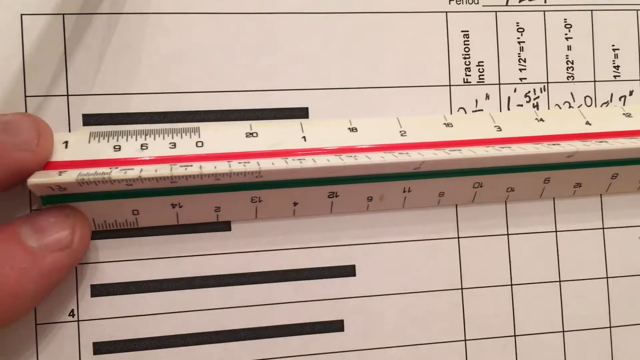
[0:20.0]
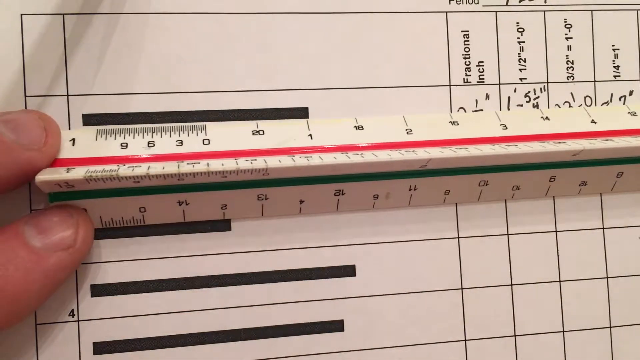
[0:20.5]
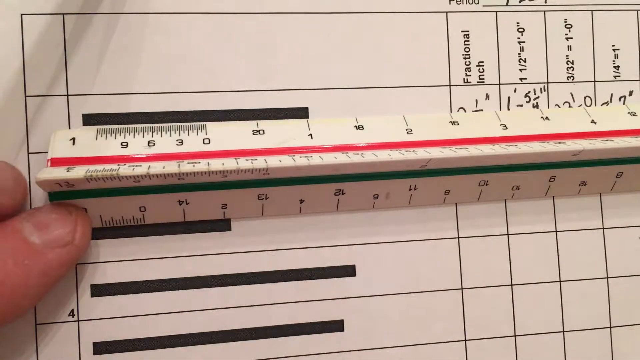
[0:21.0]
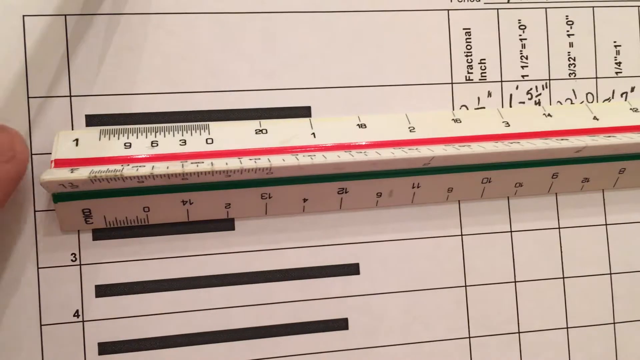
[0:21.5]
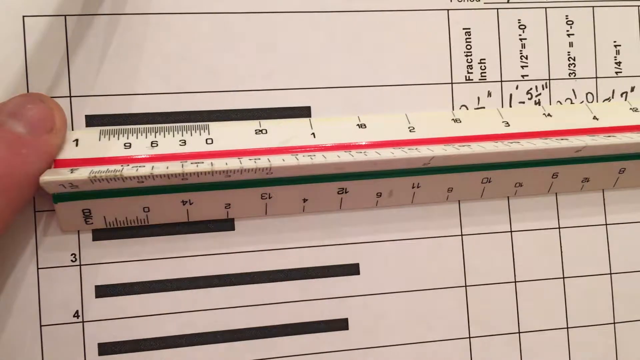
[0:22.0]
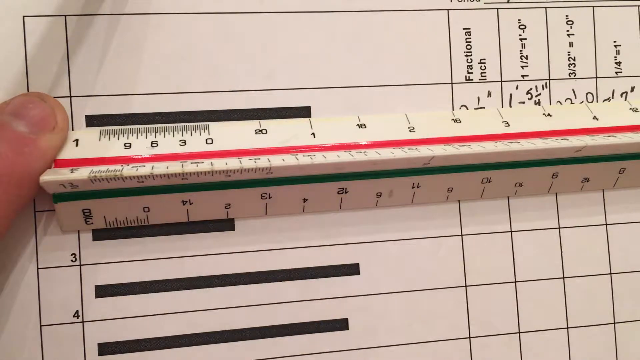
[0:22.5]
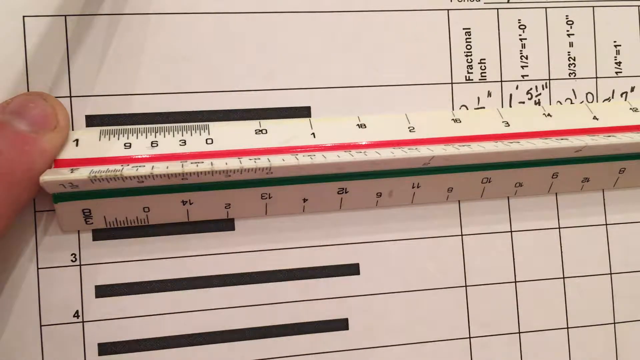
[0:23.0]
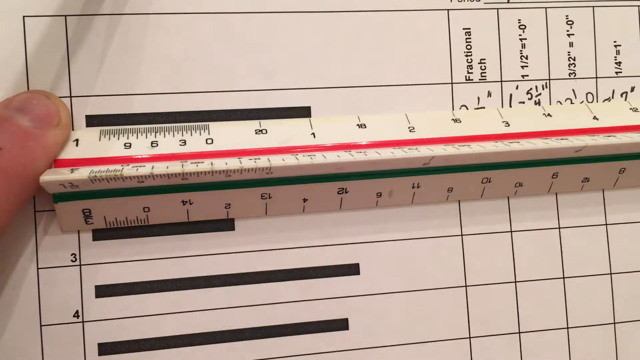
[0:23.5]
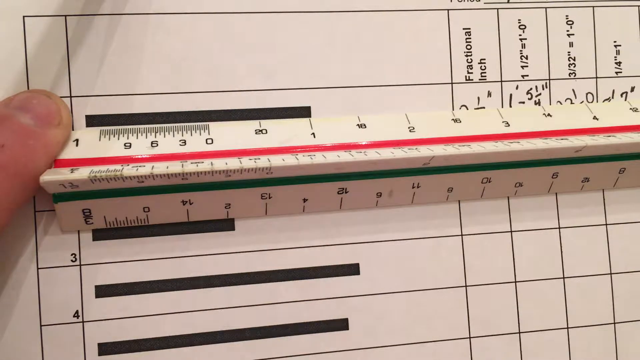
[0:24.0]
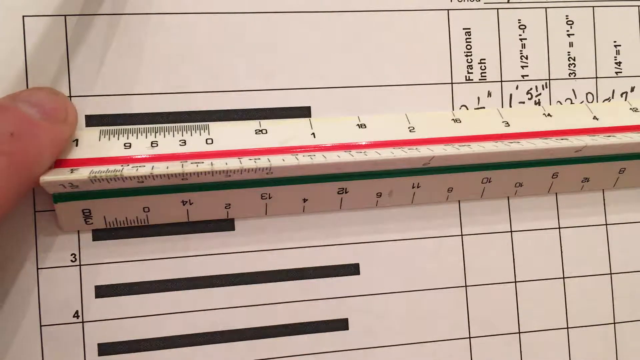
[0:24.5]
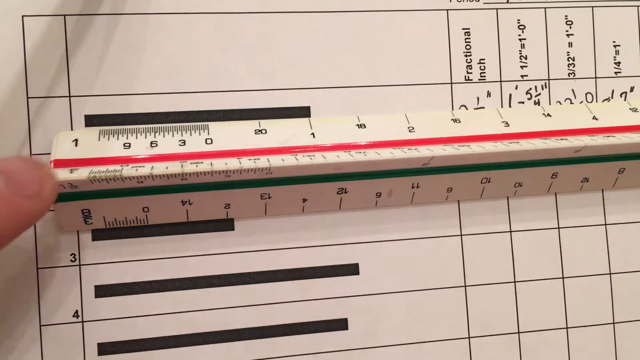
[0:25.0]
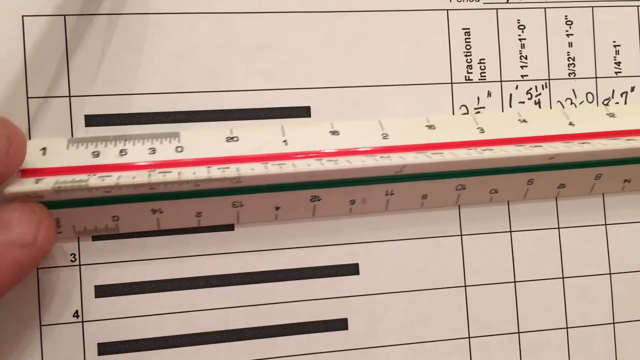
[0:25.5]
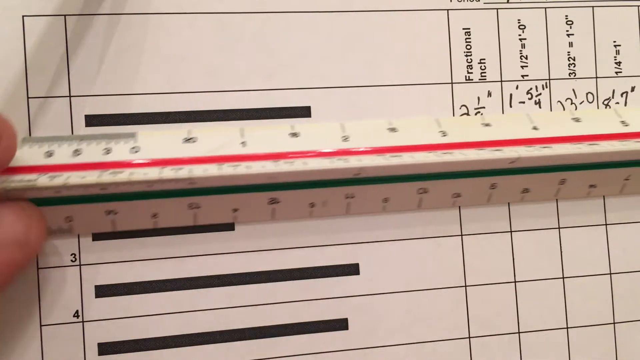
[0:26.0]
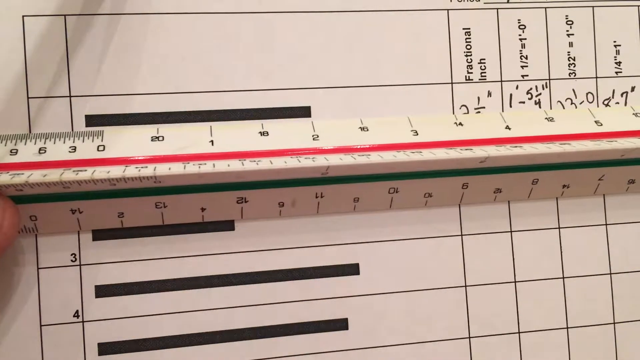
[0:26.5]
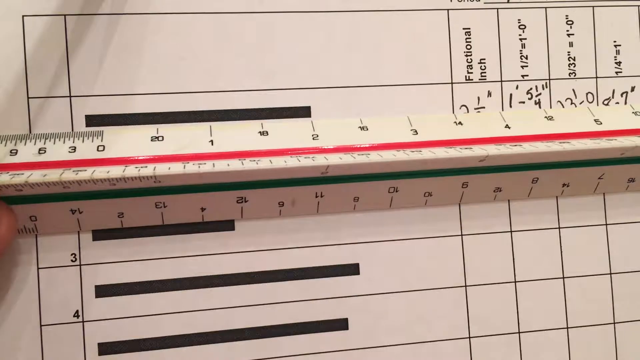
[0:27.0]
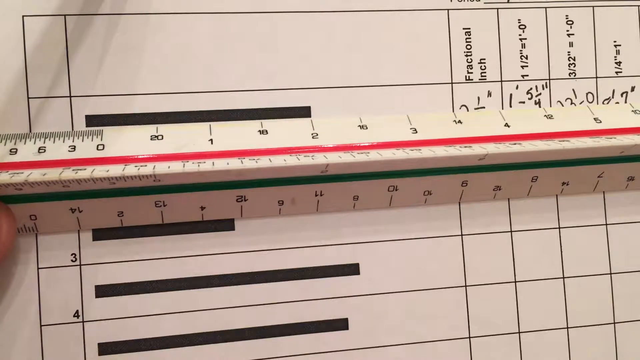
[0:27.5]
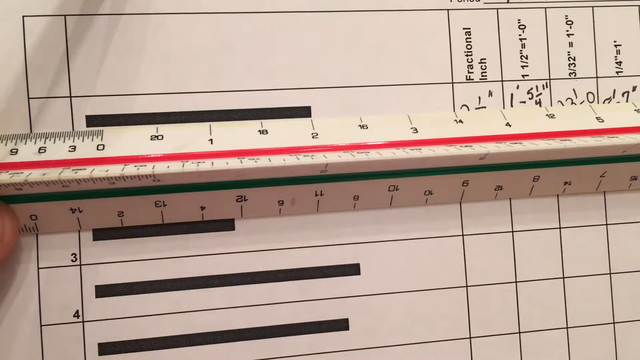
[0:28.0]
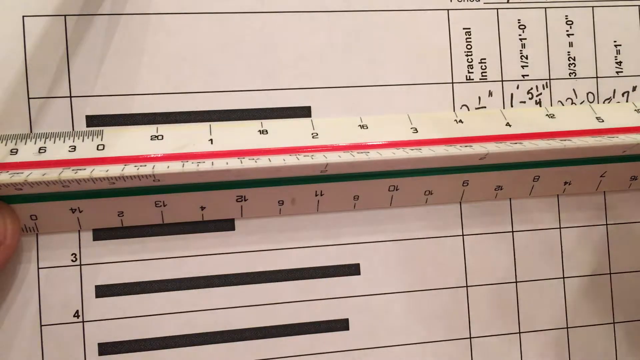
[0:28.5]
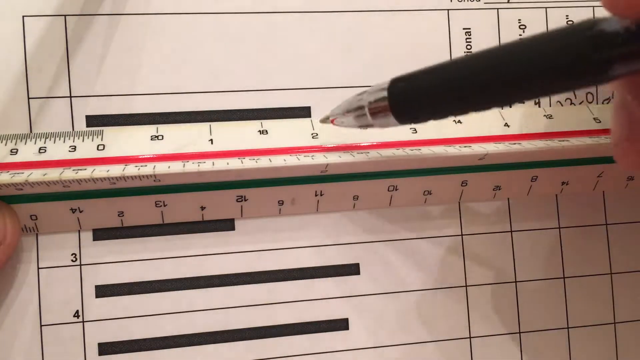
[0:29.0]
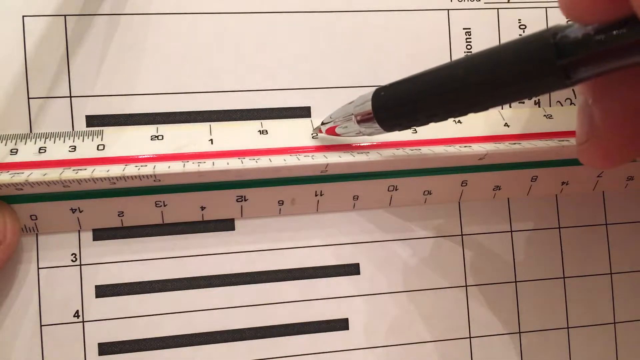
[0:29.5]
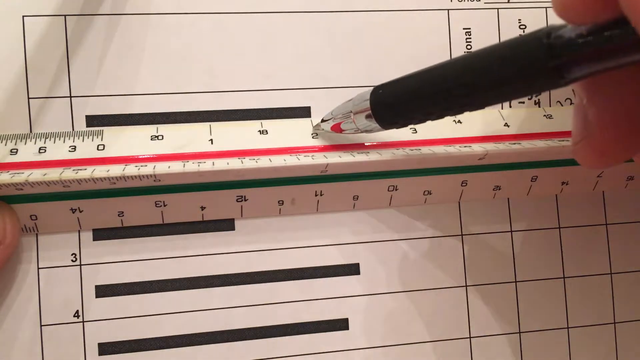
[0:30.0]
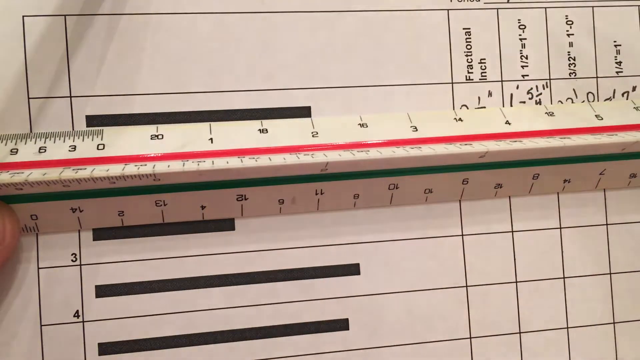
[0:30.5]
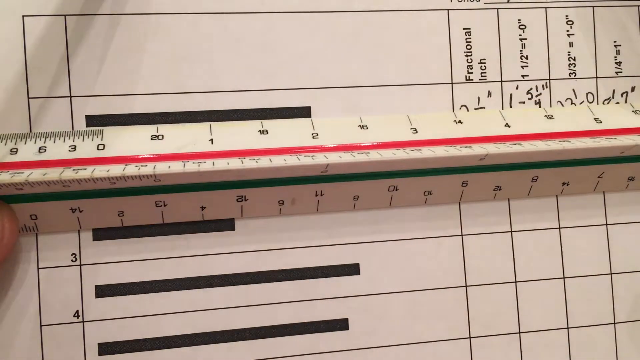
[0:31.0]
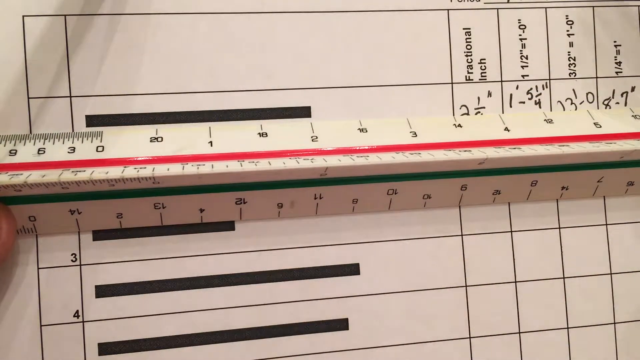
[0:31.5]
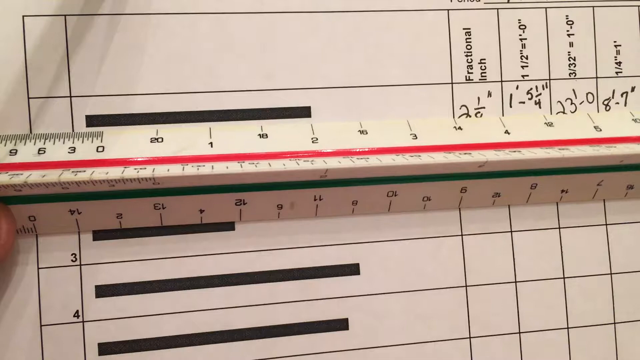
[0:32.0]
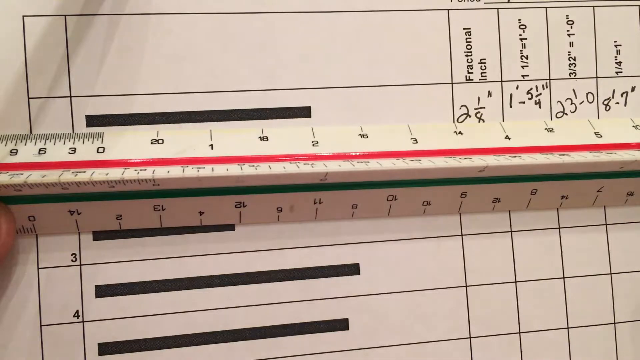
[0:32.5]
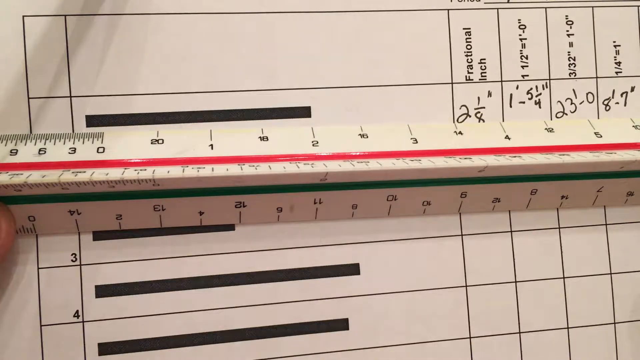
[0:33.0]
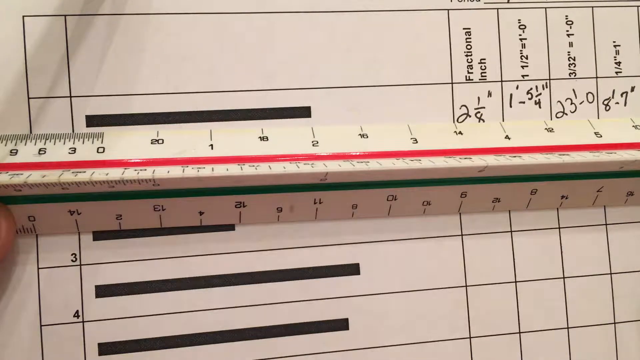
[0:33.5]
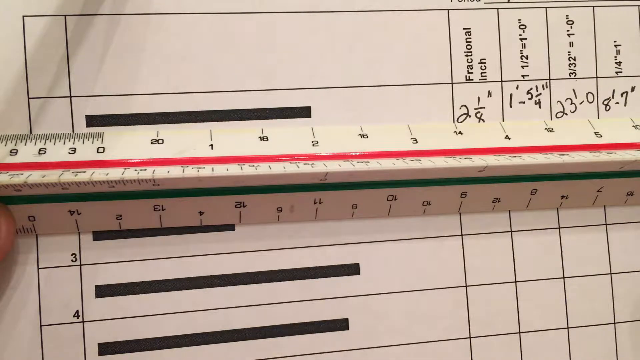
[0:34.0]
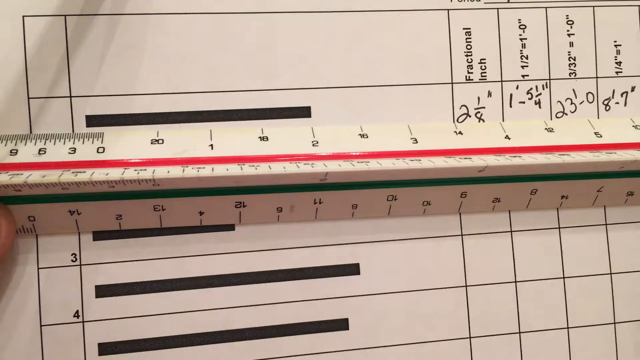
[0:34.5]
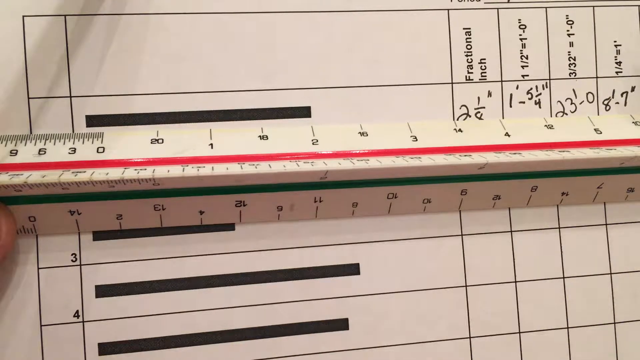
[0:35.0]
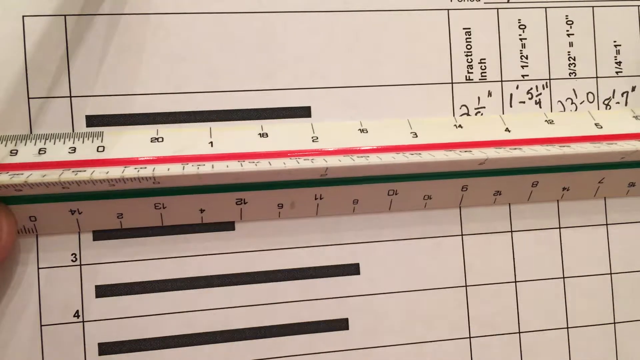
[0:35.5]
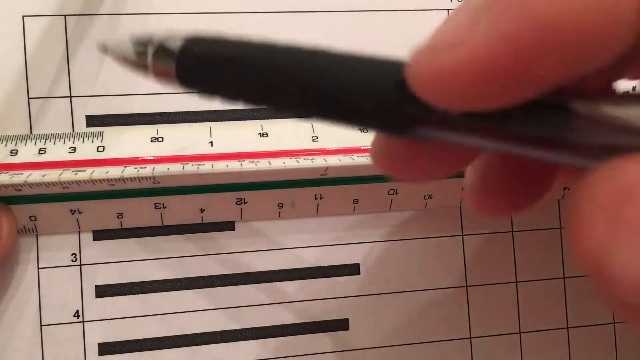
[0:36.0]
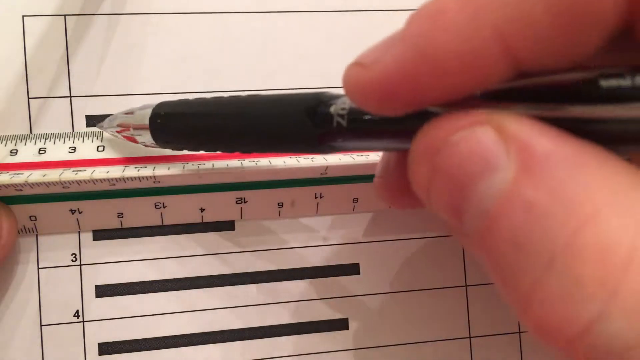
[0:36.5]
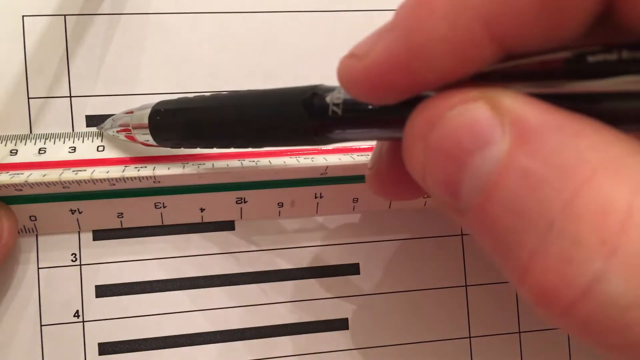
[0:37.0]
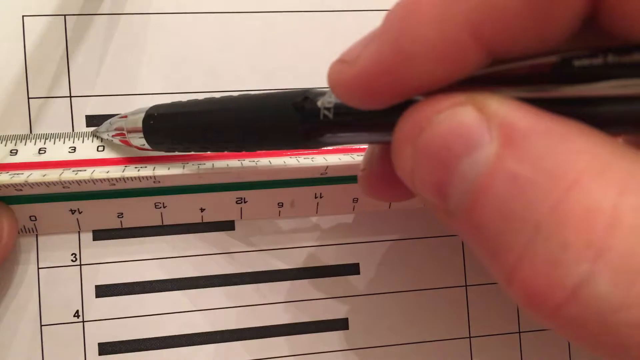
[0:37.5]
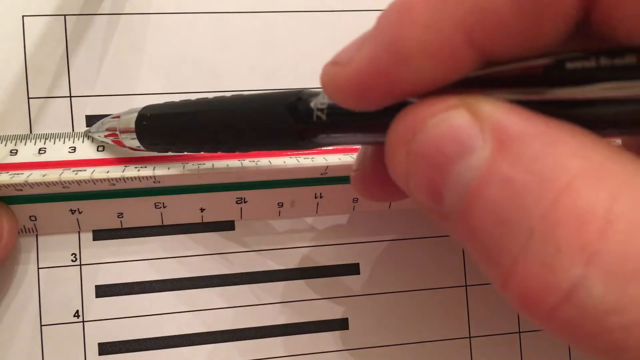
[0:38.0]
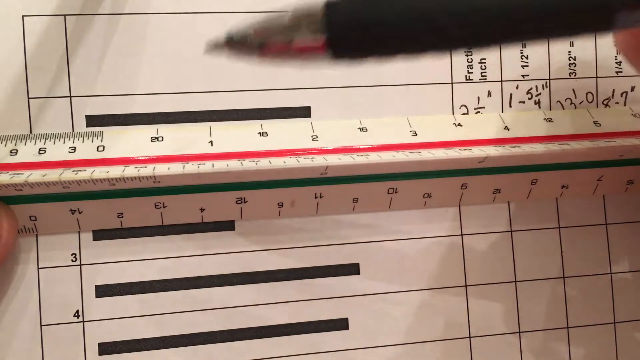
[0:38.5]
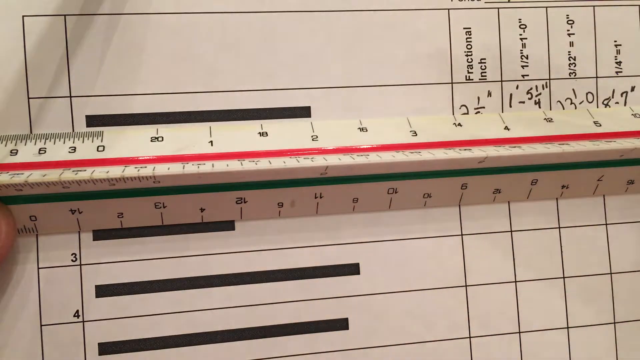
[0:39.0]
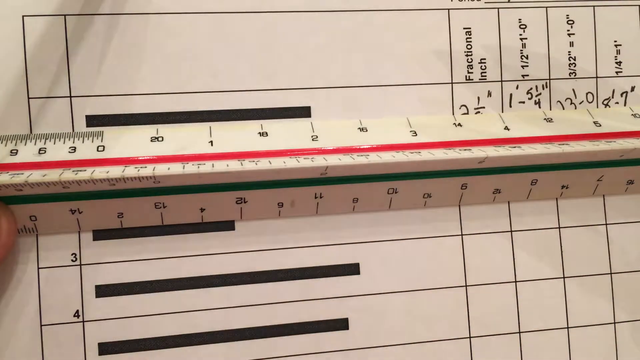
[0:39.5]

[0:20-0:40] The person is still holding the same ruler, which is not shaped like a traditional ruler: it has a sort of triangular shape and kind of loops up on both sides. On the right side there is a similar thick mark, but green instead of red; it is not in the light, so it is hard to see clearly, but it looks similar to the red side. The ruler is moved around a bit and tilted down to the right a little, and the person points out certain things with a black pen. They seem especially focused on the units before zero, apparently the quarter measurements.